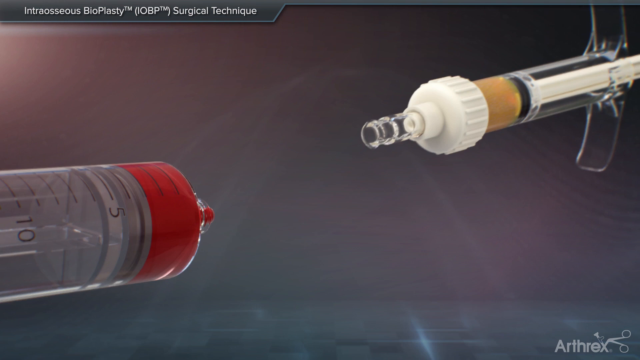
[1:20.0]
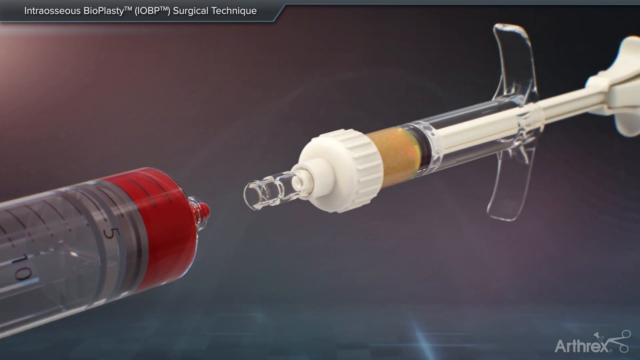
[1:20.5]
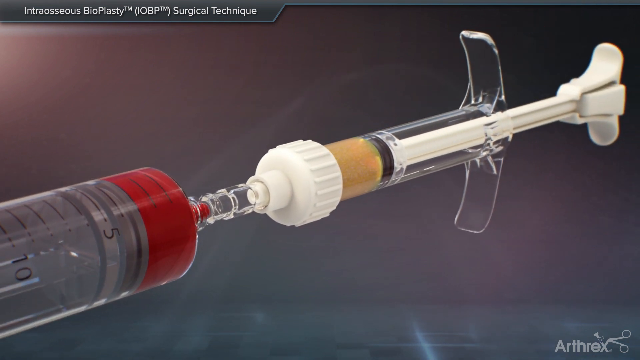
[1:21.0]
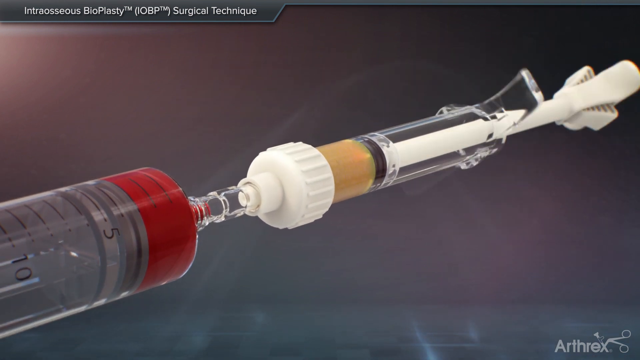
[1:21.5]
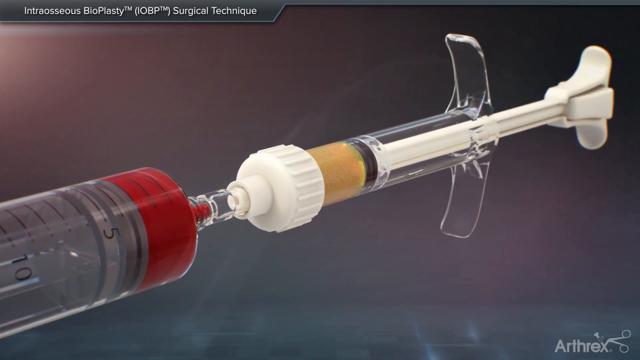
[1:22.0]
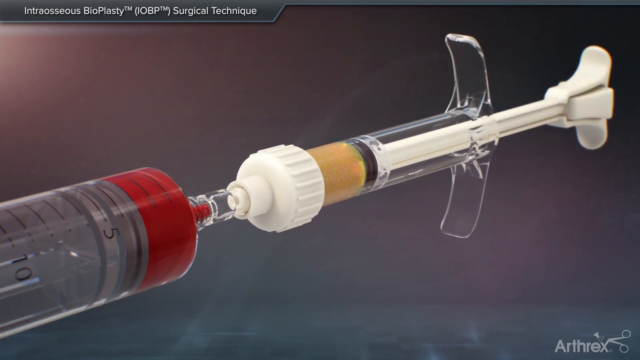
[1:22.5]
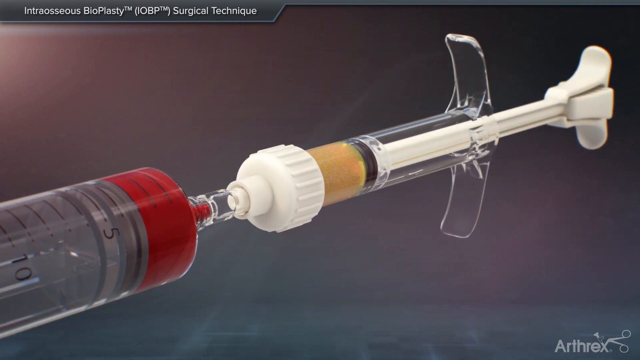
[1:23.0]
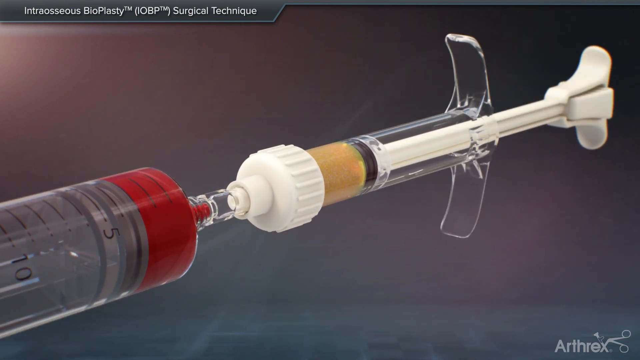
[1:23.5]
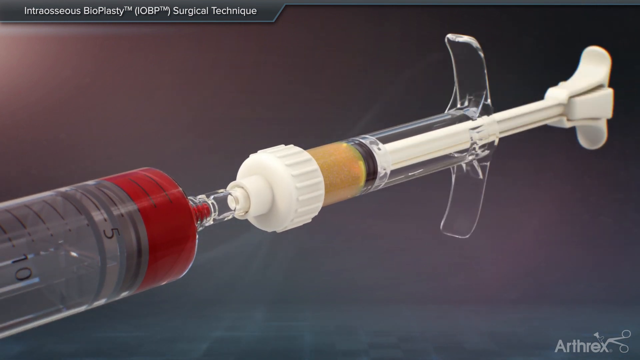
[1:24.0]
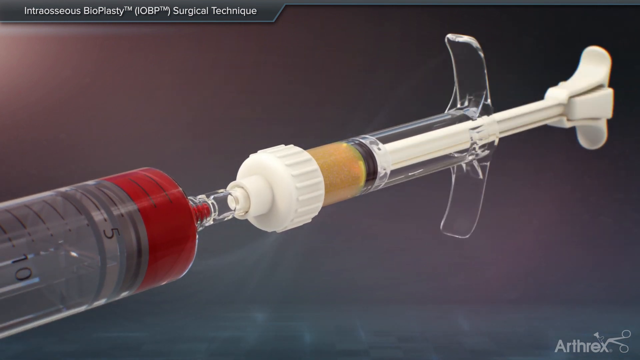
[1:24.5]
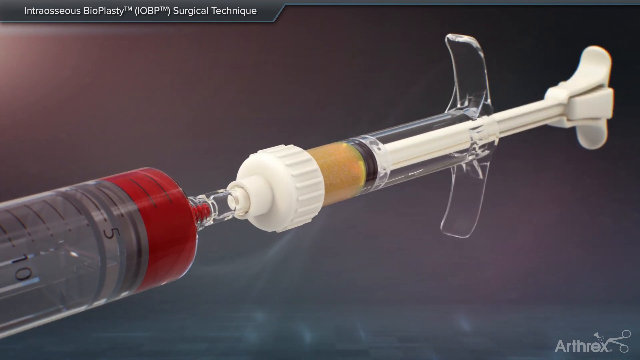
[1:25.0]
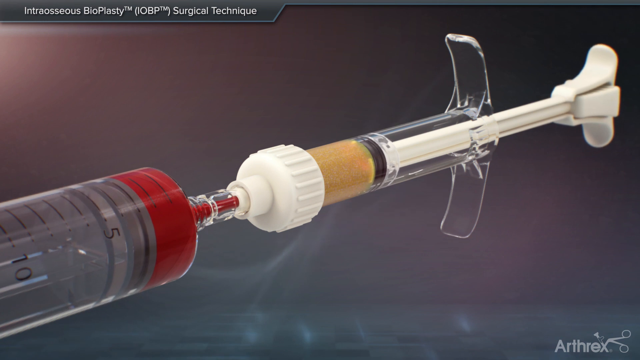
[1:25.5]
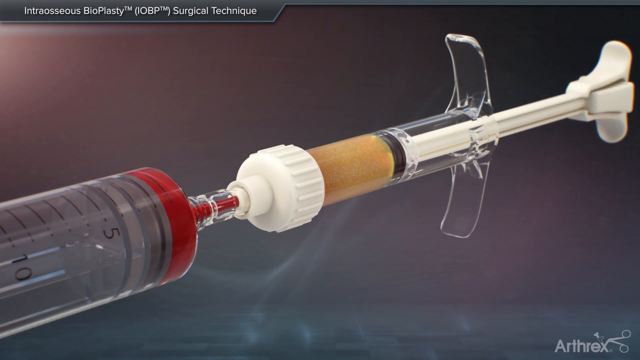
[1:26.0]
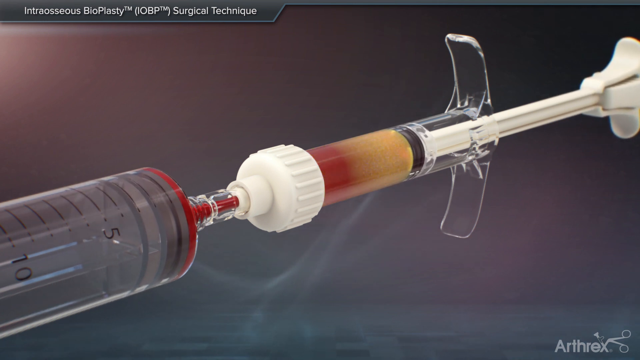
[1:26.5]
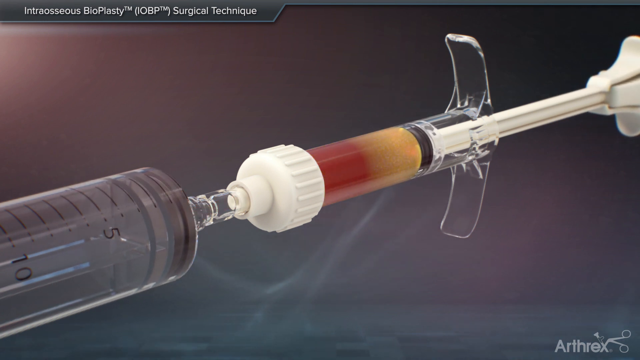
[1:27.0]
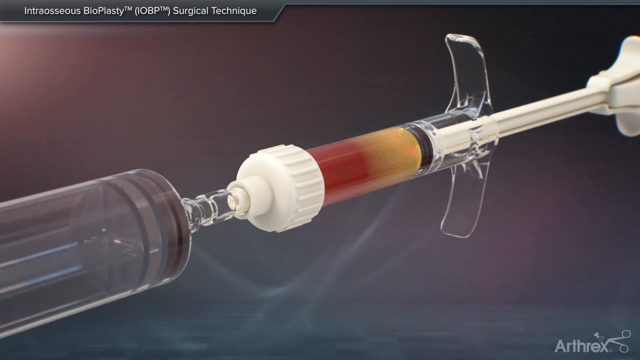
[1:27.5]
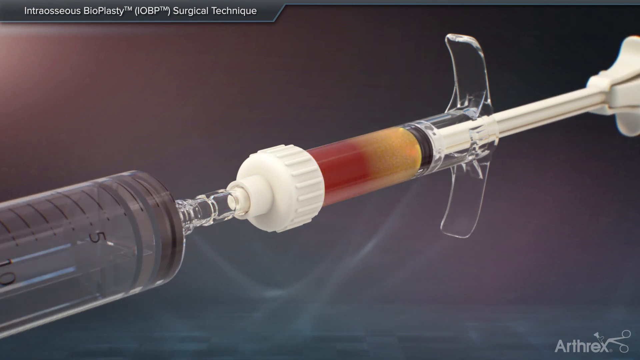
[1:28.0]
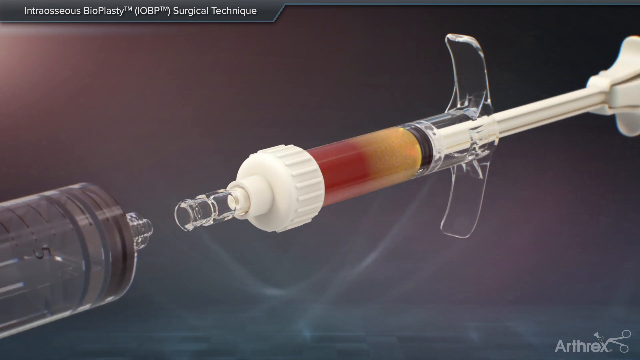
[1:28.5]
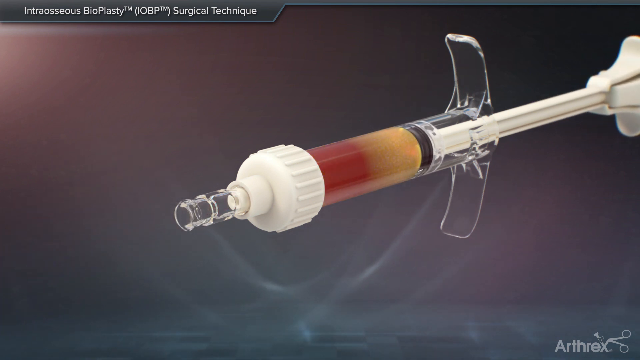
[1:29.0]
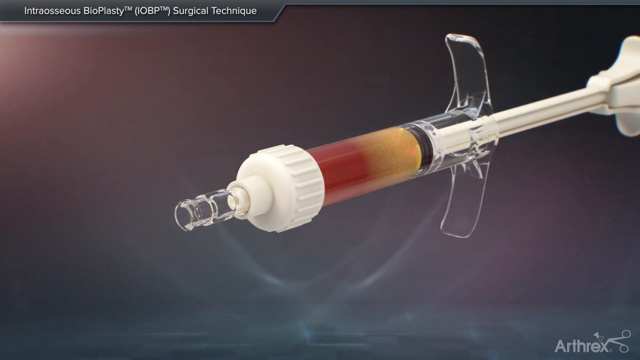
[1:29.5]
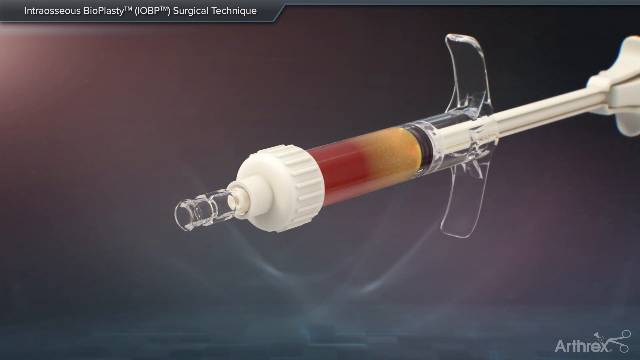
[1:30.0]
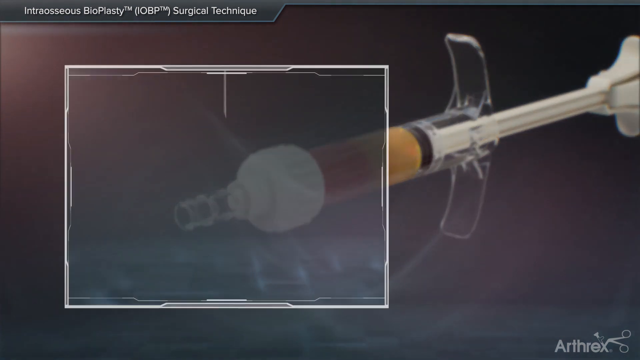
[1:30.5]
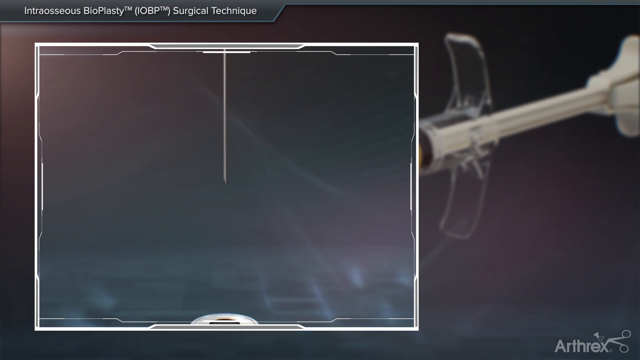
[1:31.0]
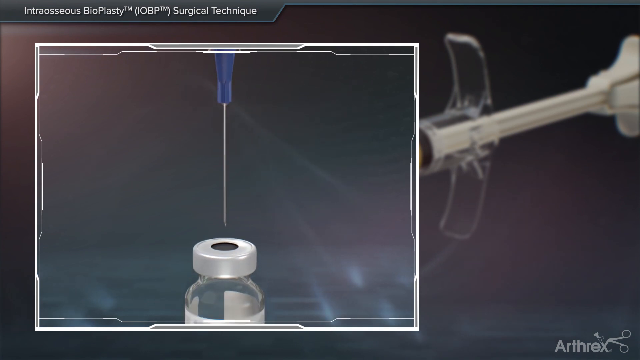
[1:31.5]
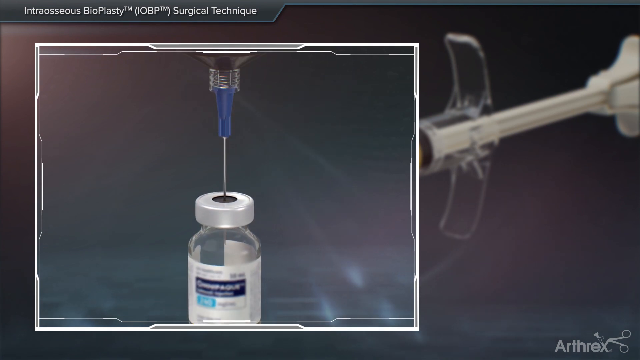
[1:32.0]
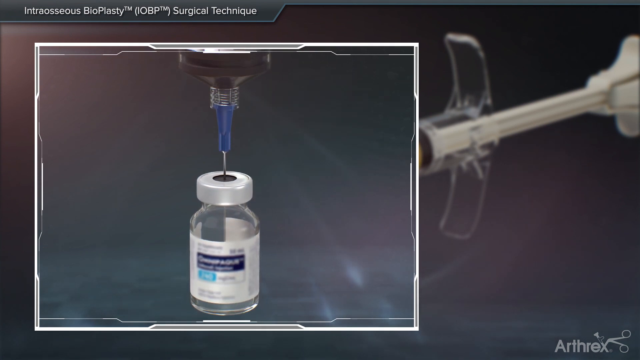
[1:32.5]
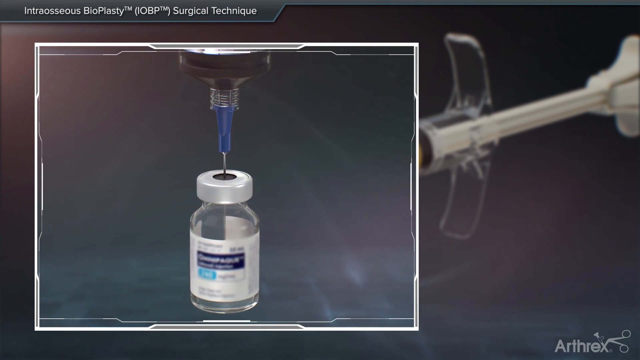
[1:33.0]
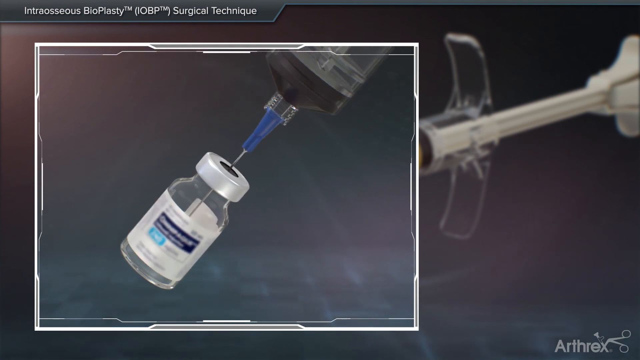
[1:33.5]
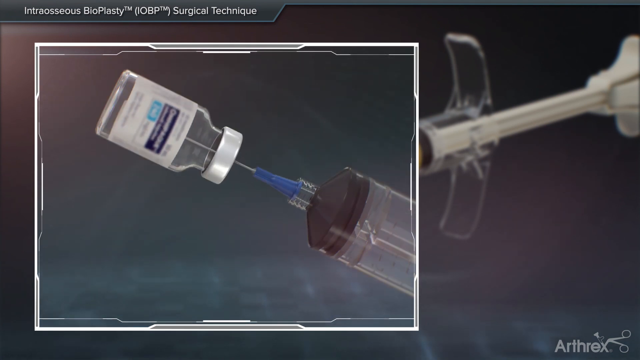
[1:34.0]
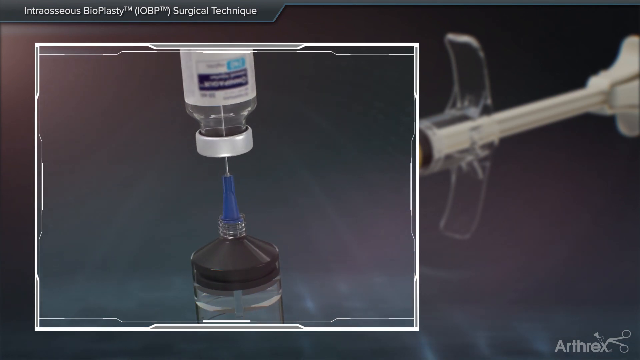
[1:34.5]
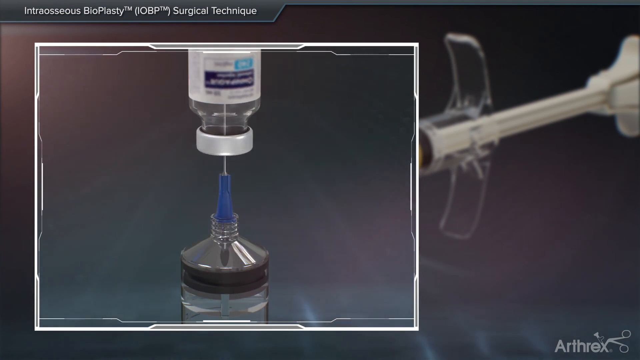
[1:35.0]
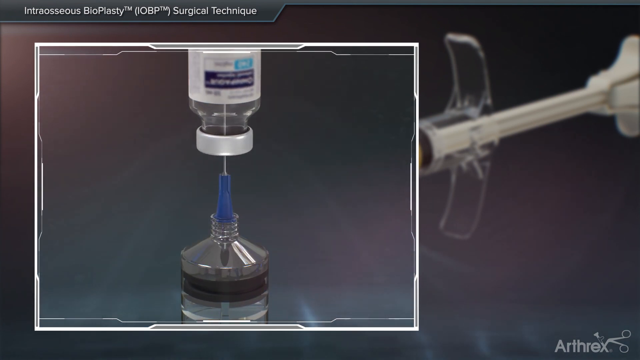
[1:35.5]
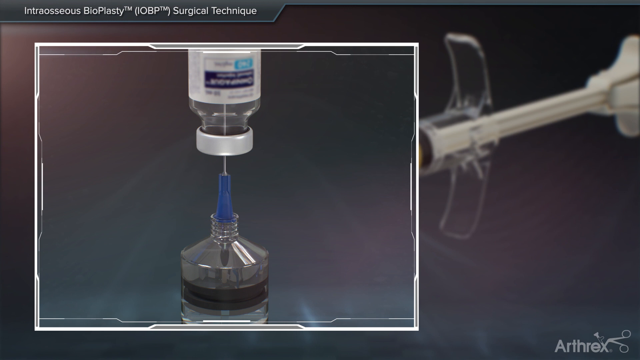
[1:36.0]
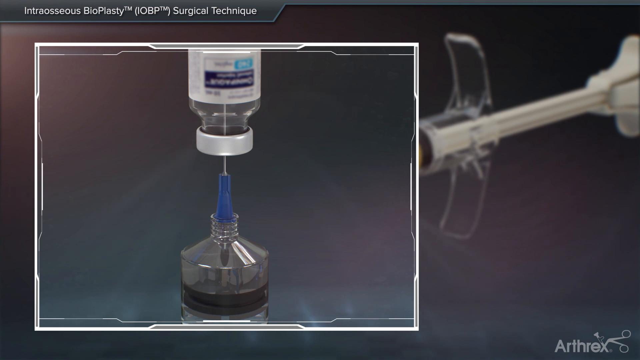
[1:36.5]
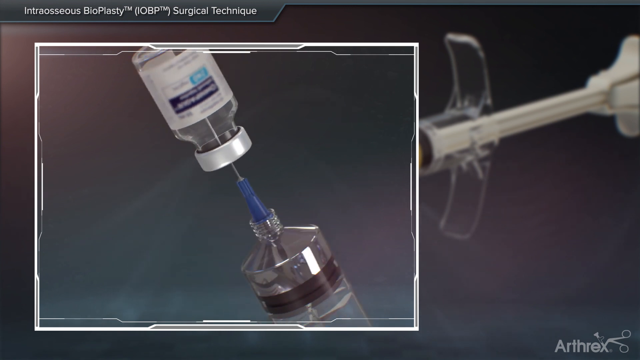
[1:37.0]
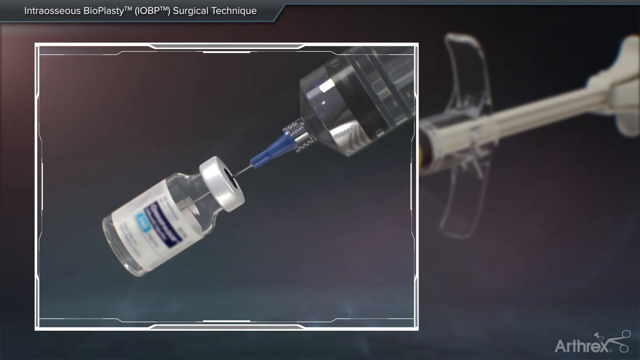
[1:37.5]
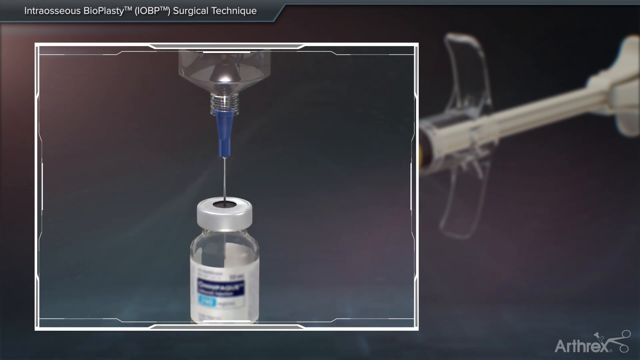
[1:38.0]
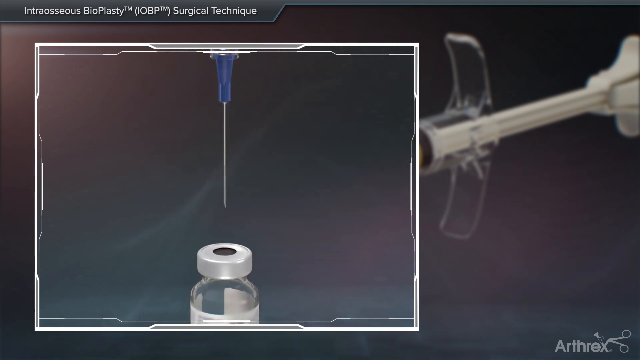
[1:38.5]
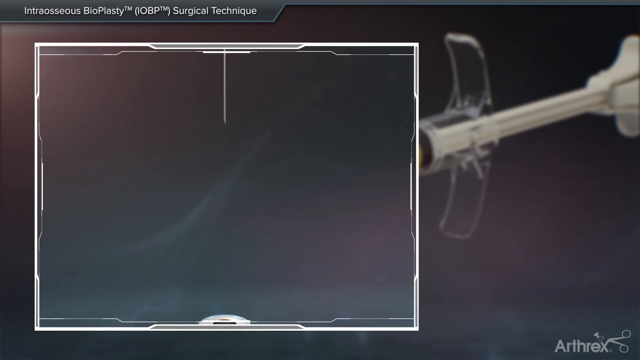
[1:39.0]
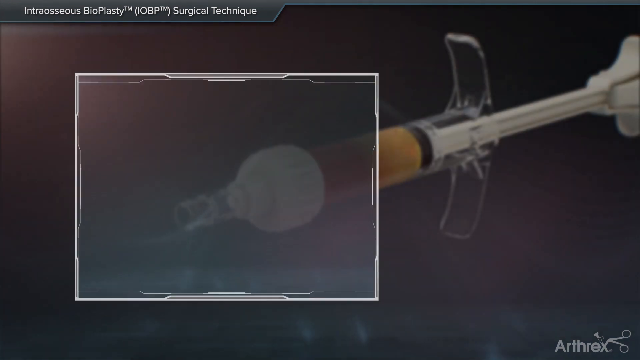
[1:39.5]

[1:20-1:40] The cylinder is now full of red liquid, looking by its measurement to be maybe about three cc's. It is attached to another syringe at the end where a needle would typically go. This second syringe is different: it has what looks like clear plastic handles on either side, contains some yellow liquid, and has an opaque plastic tip on its end. On the right-hand side this other syringe is screwed on or attached to the end of the initial cylinder, and it pulls the red liquid in, so it now holds both the yellow liquid and the red liquid. The first cylinder is then unscrewed from the device. In another inset, a second cylinder with a needle is poked into the top of a bottle of some sort of liquid medication. The bottle is turned upside down to pull the liquid into the syringe, then turned right side up, and the needle is removed up and out of the bottle with the liquid medication inside the syringe.